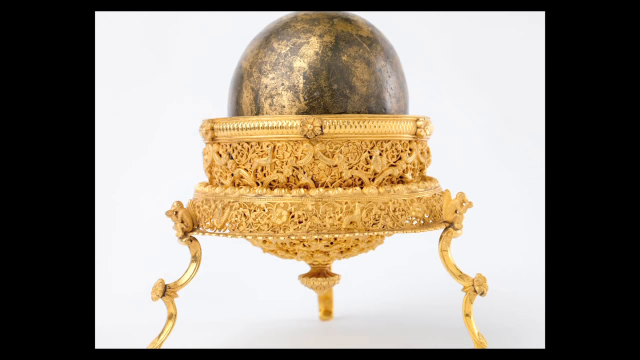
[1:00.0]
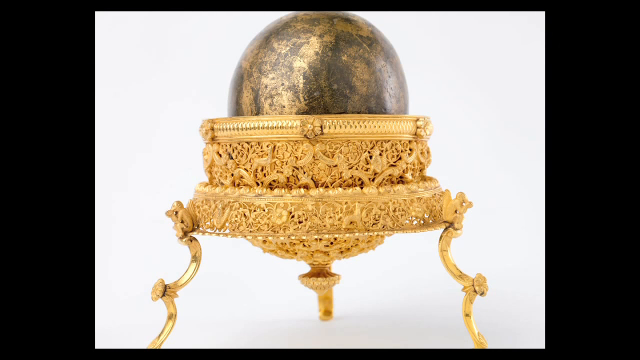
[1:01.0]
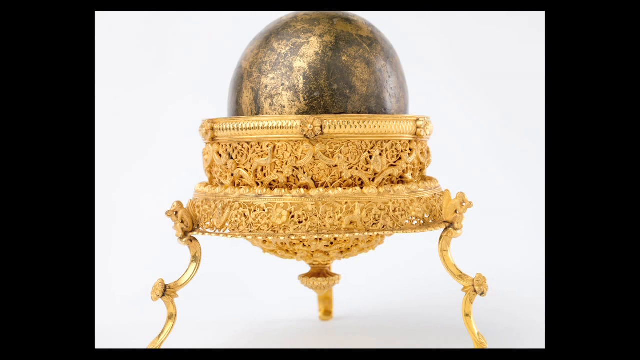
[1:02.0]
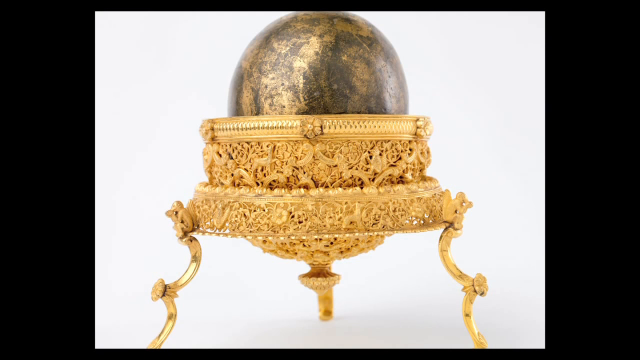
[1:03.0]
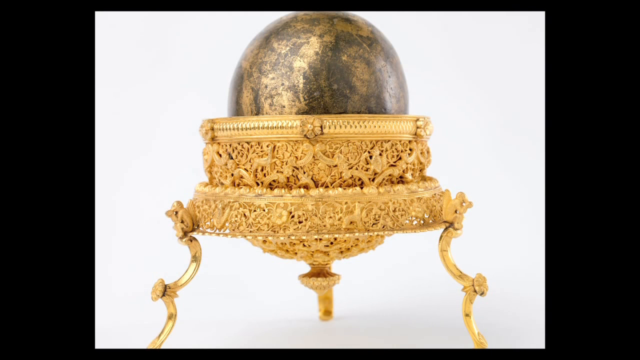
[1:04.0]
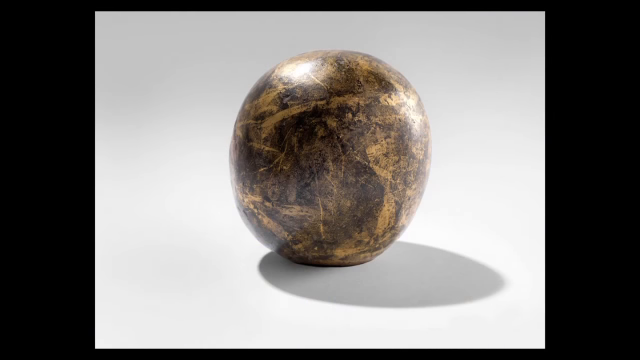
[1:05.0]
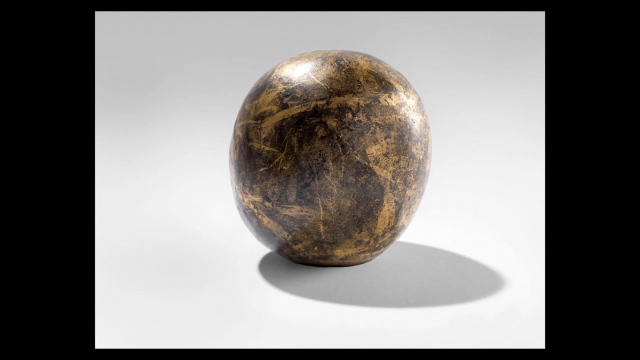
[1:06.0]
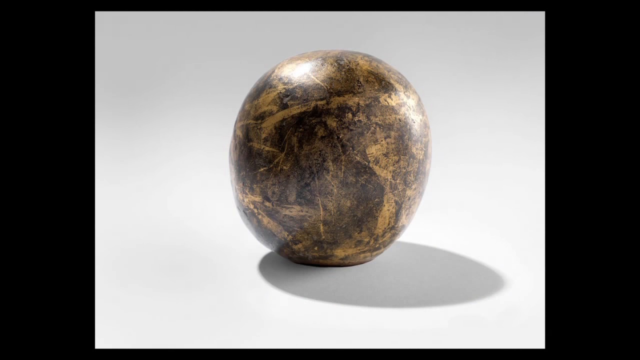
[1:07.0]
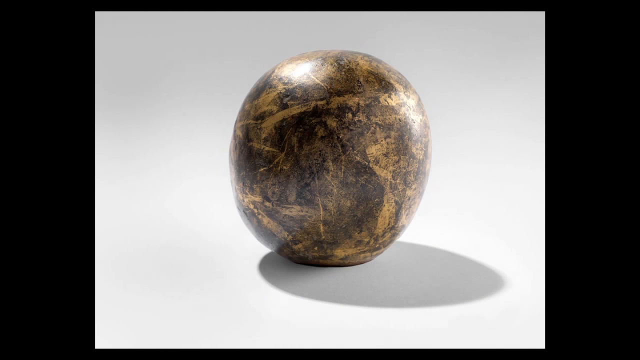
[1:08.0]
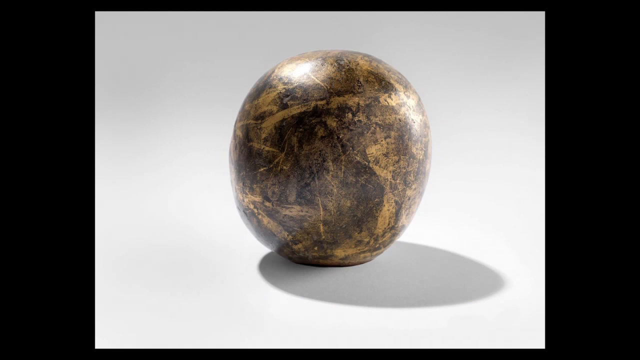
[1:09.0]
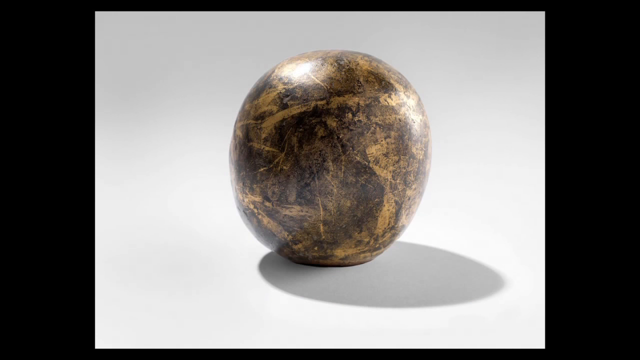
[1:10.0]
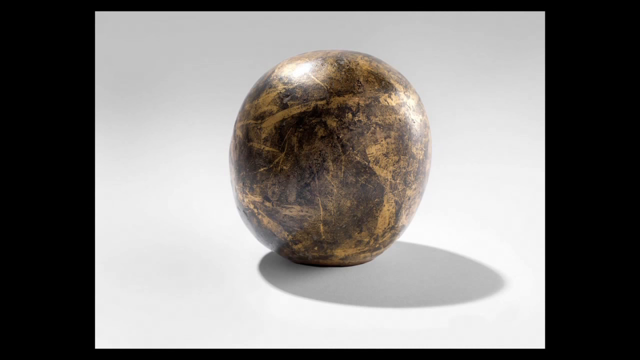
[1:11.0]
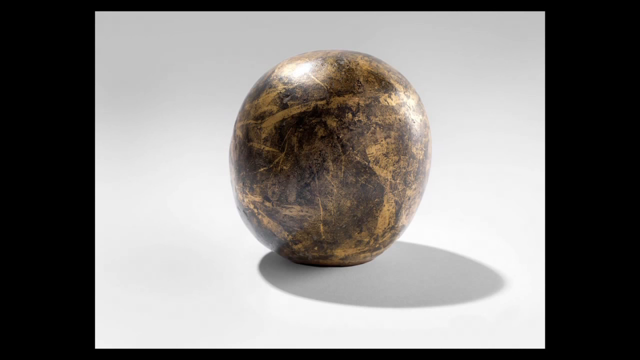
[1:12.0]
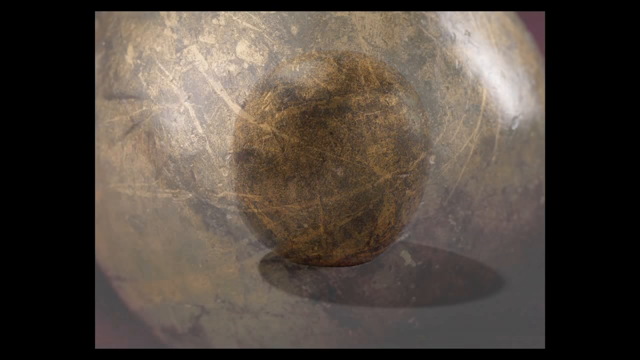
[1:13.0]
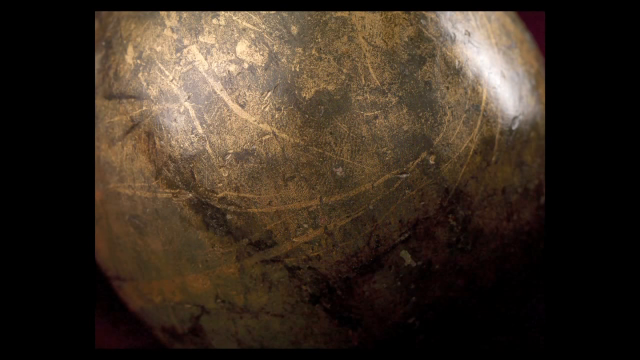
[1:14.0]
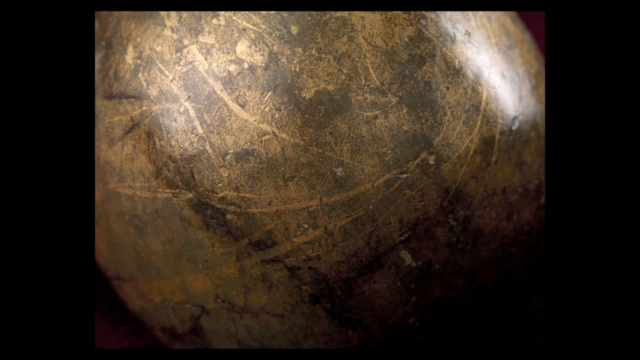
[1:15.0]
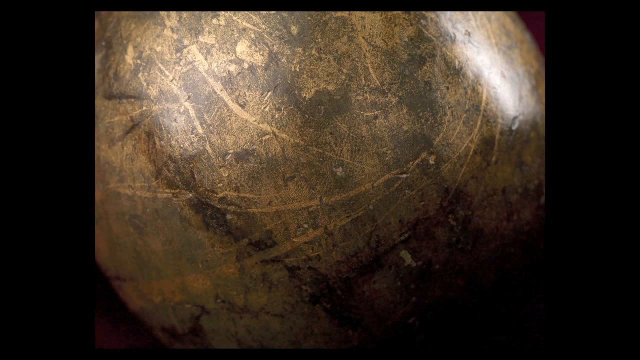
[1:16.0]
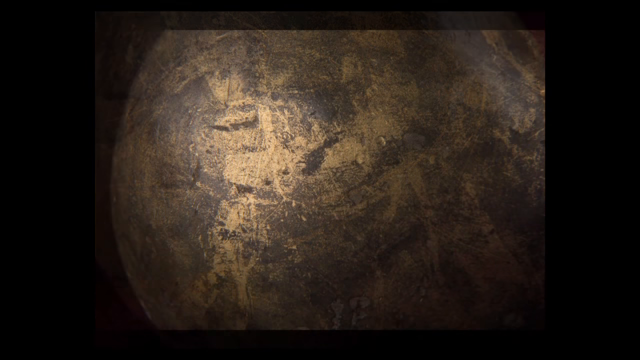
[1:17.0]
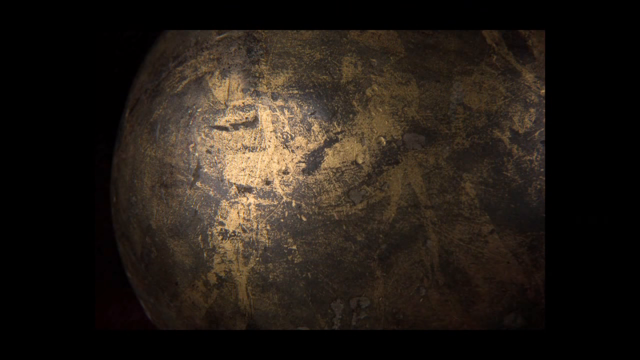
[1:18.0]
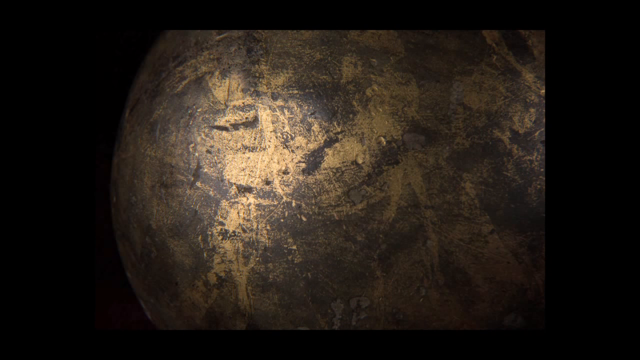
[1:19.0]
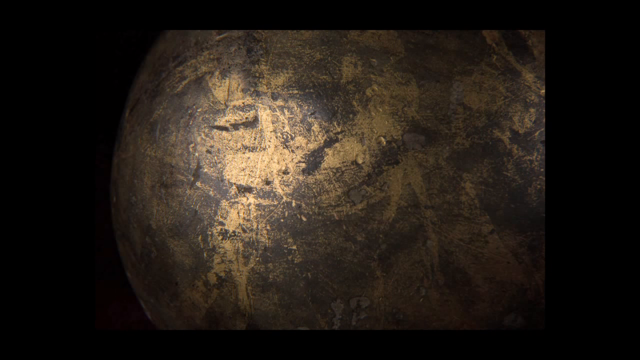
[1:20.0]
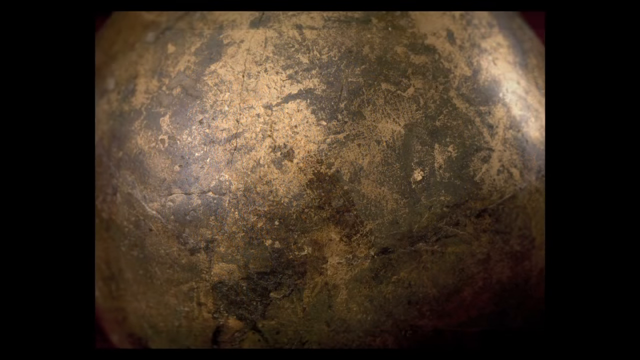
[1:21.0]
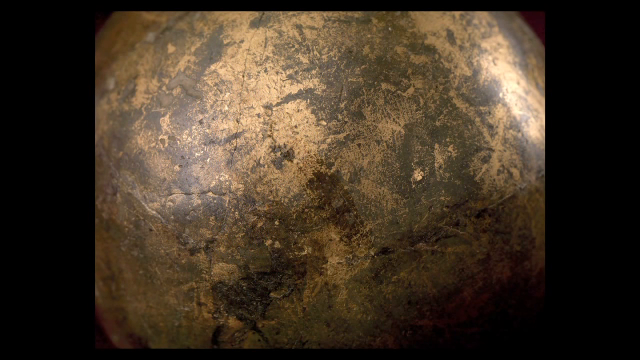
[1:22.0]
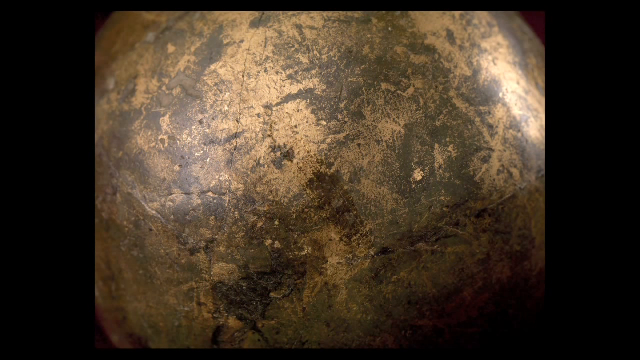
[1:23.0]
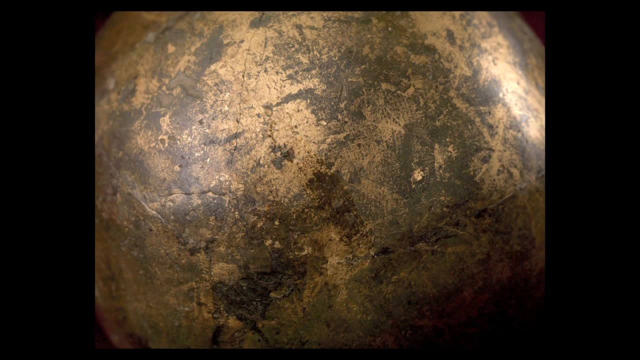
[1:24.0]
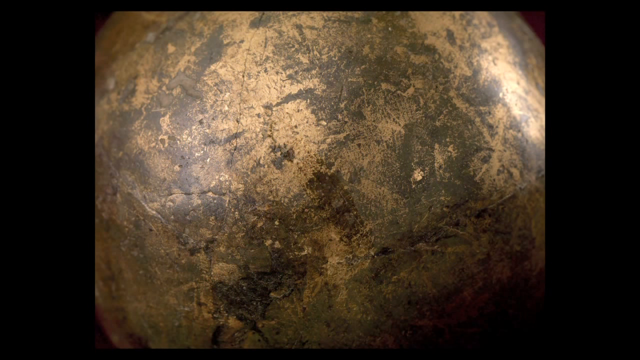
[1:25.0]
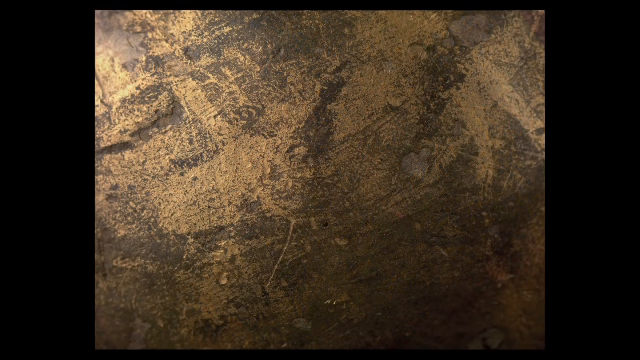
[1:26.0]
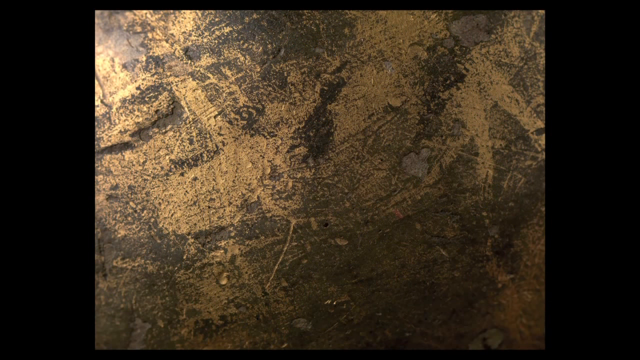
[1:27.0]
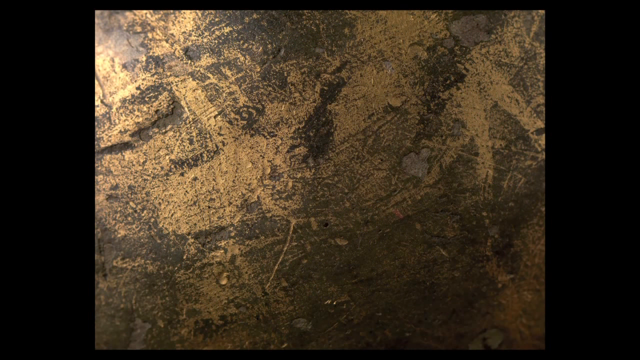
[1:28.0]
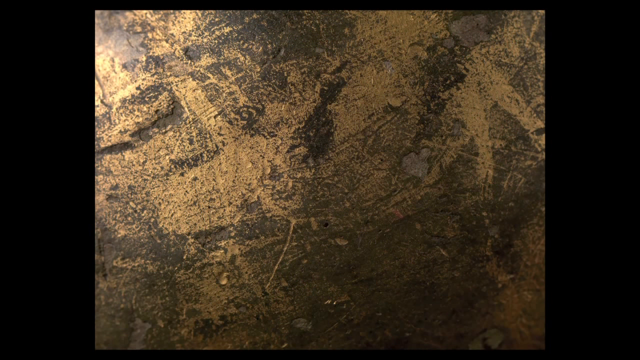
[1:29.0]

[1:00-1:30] The object looks like a royal type of jewel, for kings and queens. It appears to be made fully of gold, and seems very heavy, very expensive and almost like some type of antique. It is standing on a silky maroon type of cloth. Closer views show various patterns and many animals, such as birds, giraffes, cats and monkeys. At the top there is a bigger bird, which seems to be the most important one. A shot shows the jewel with something in it, which appears to be a diamond or a rock of some sort; it fits directly into the space as if it was made for it.